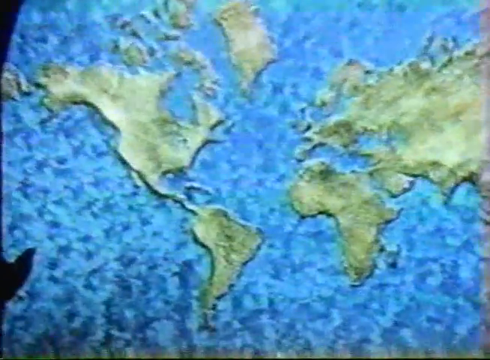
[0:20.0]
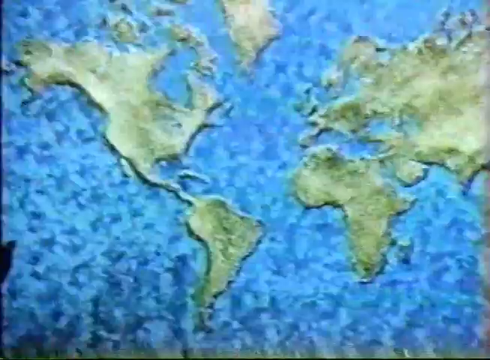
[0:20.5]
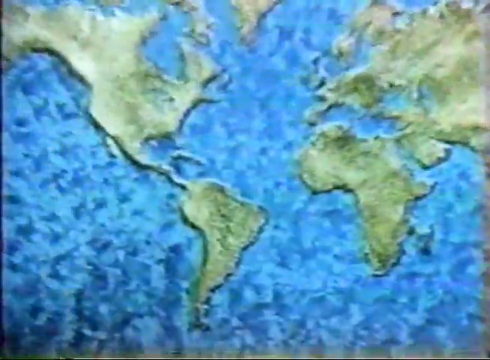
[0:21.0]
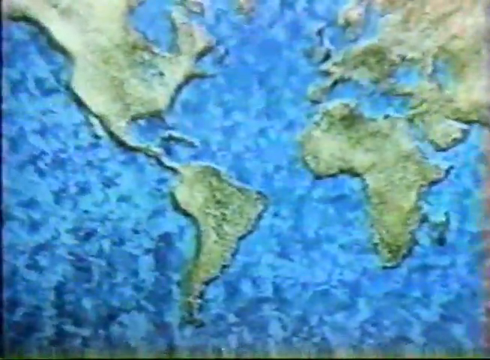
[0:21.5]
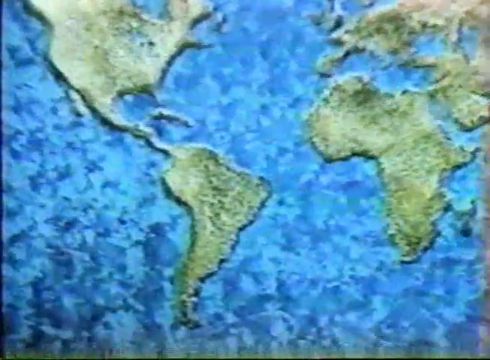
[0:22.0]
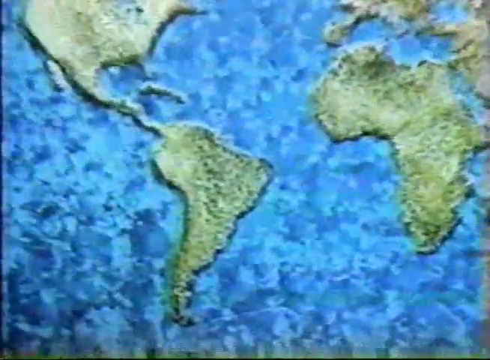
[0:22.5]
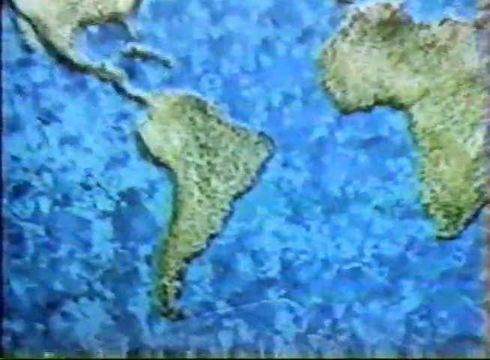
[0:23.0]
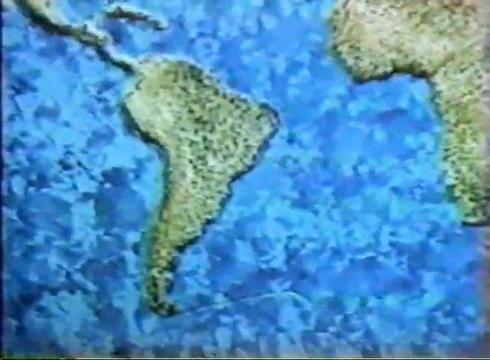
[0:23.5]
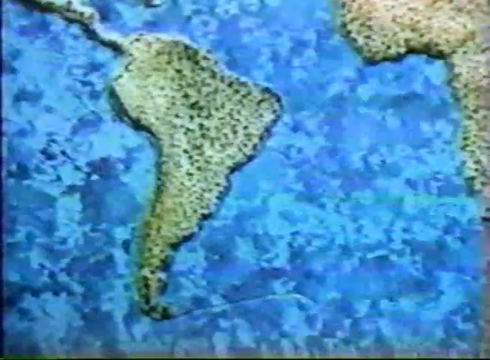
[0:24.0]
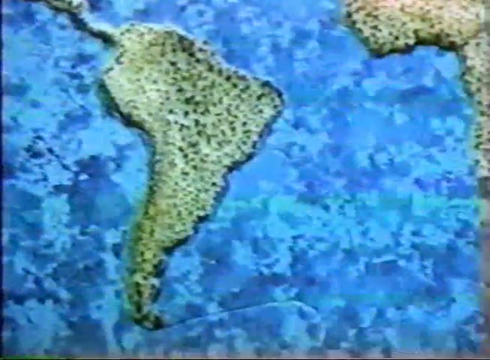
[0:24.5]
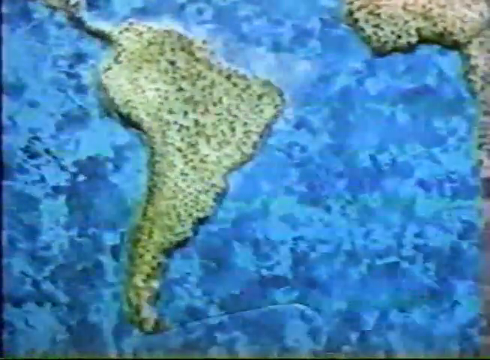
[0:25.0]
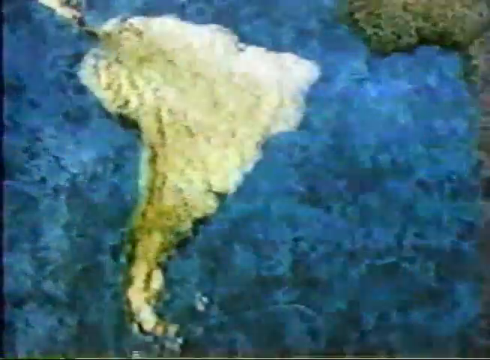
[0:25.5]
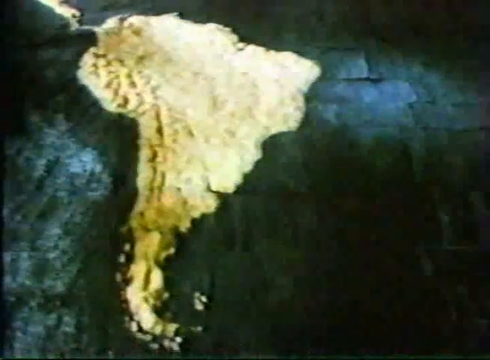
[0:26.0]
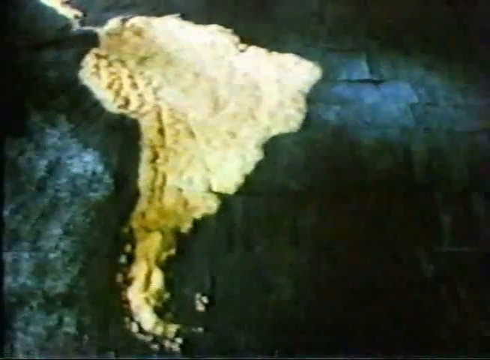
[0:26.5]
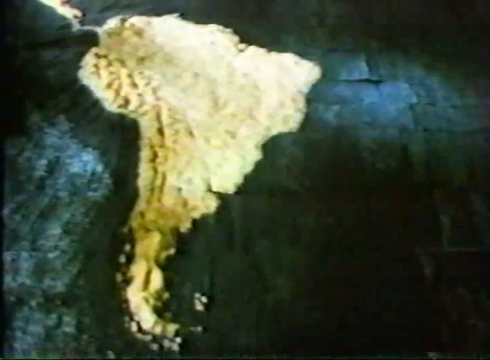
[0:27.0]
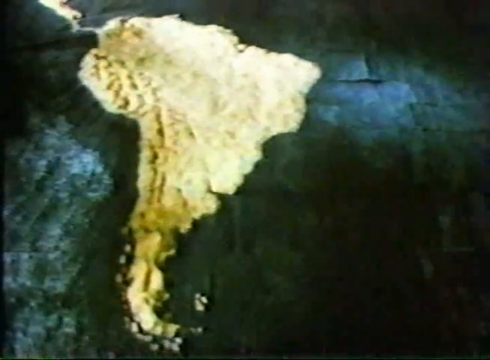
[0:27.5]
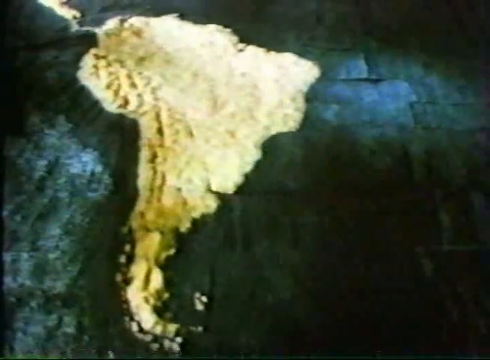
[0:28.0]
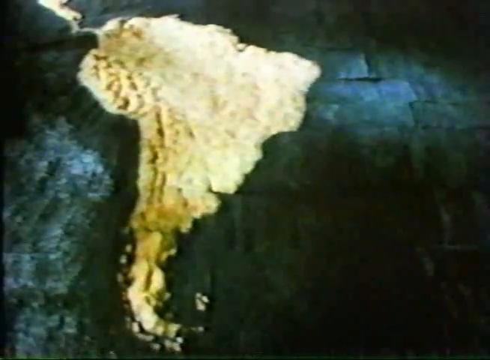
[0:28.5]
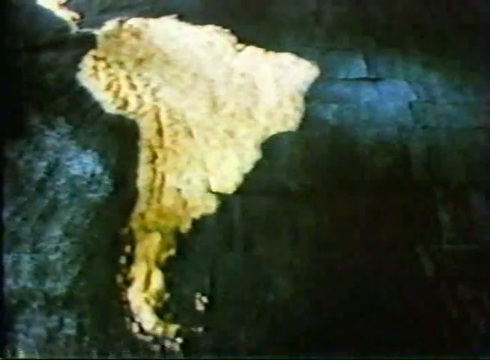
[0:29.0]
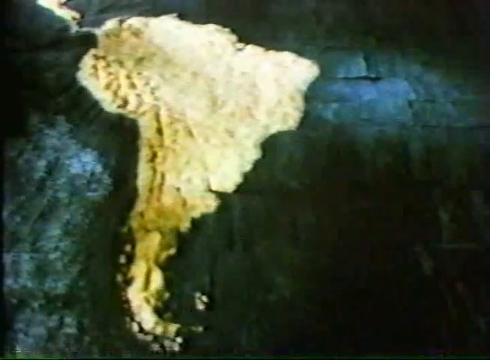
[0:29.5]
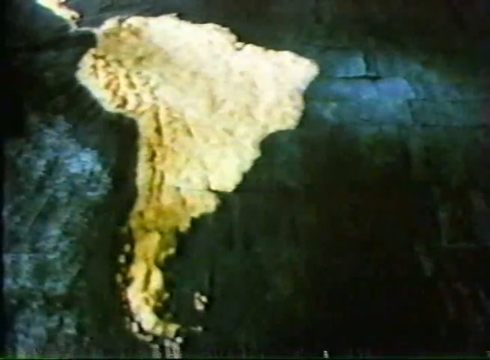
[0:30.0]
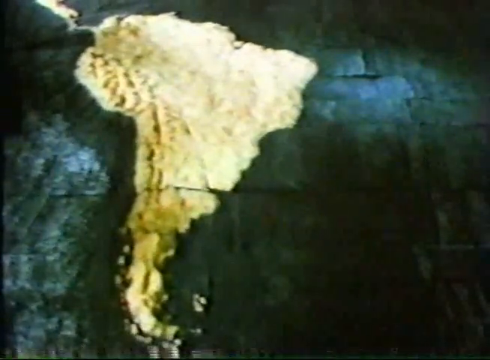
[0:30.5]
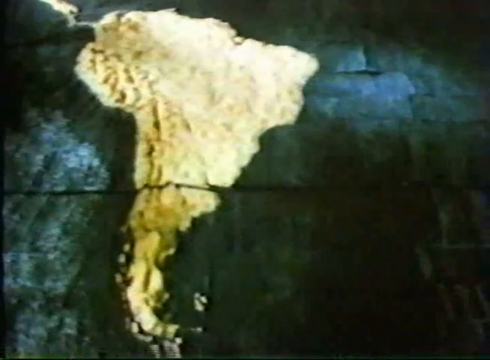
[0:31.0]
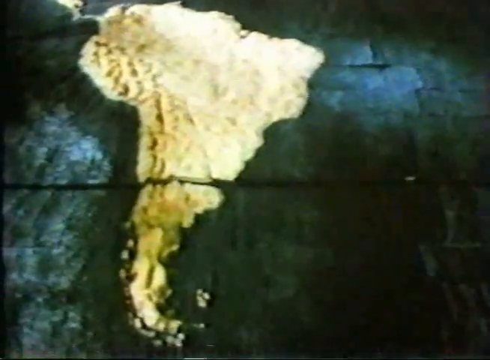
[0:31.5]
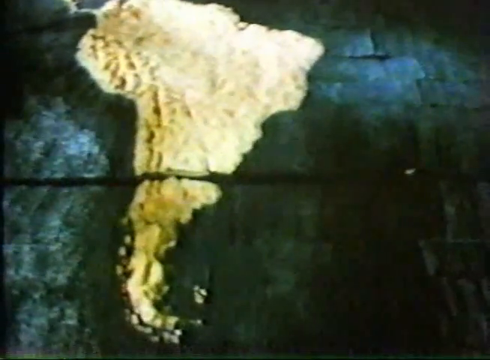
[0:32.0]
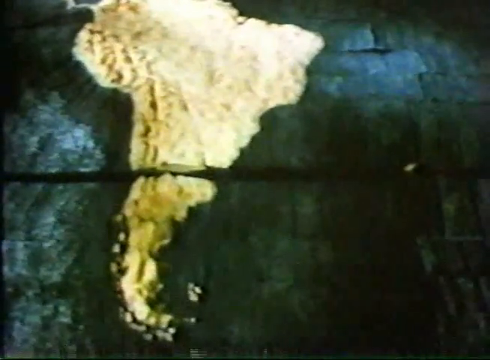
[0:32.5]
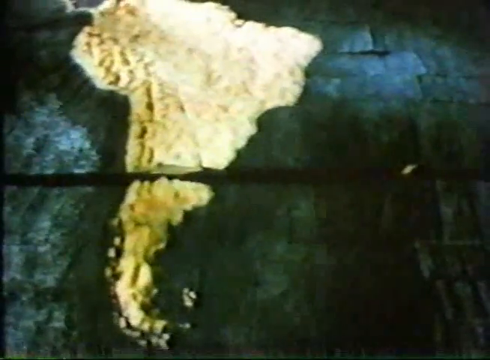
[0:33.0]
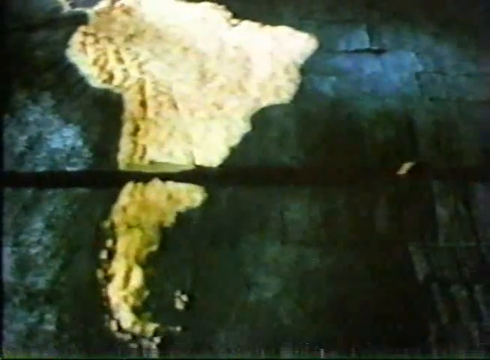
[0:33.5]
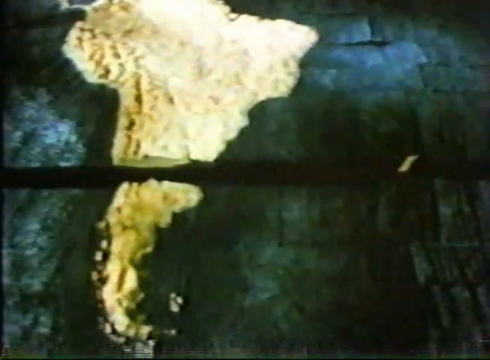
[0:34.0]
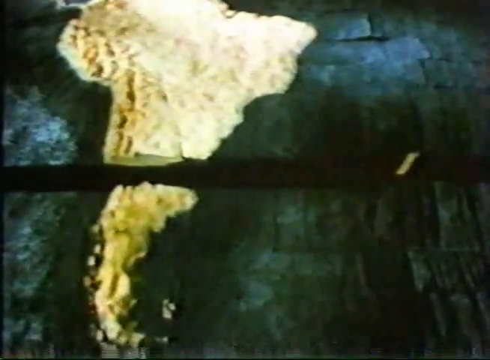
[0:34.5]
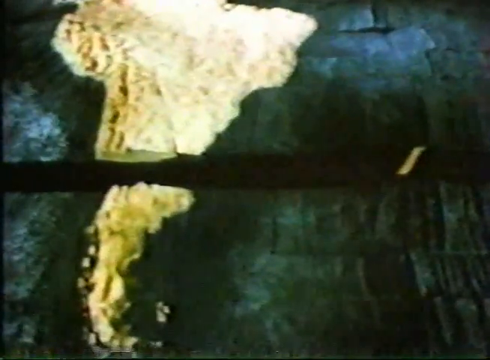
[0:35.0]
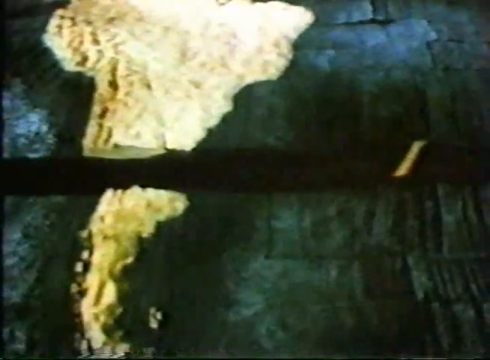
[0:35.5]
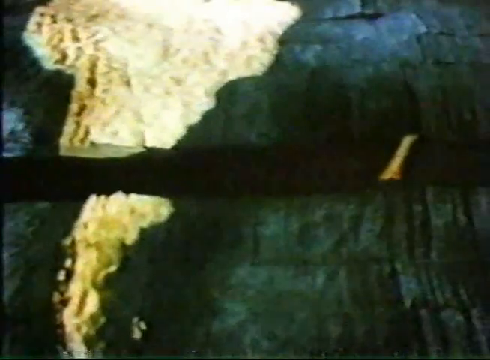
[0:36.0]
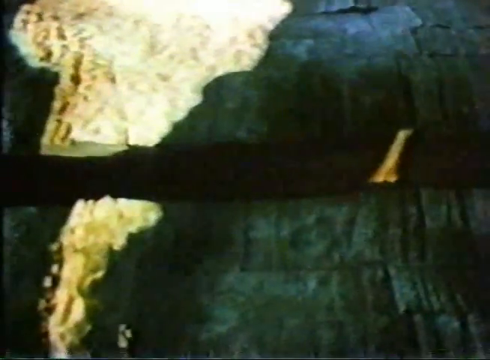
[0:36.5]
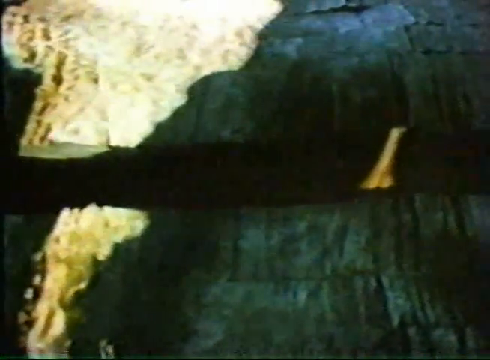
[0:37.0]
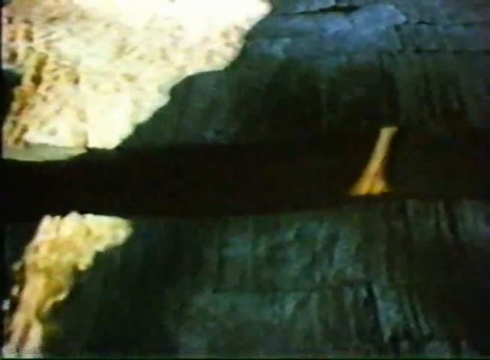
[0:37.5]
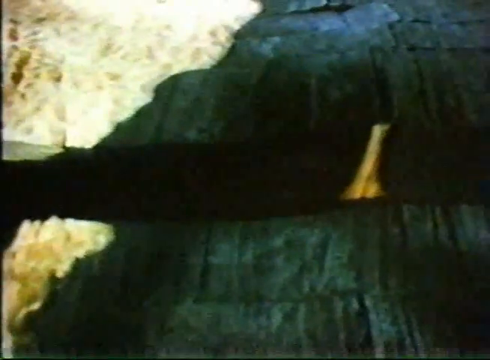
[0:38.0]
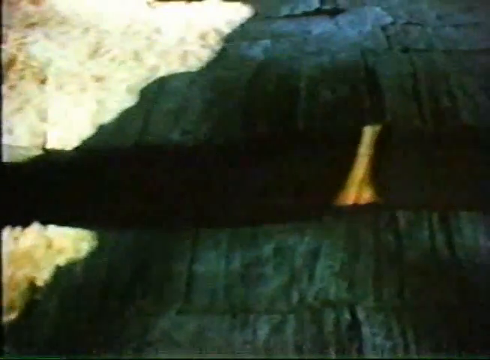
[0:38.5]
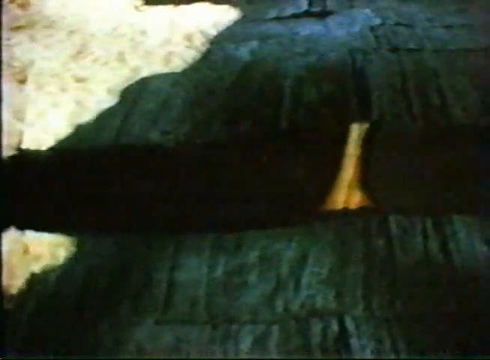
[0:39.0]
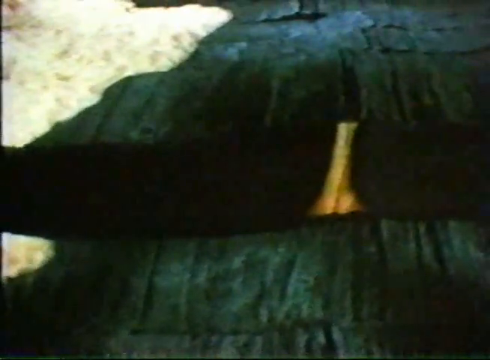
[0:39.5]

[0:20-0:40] The map is now joined together, with textured green and blue parts and mostly a creamish color. The camera zooms in and keeps moving closer, showing the continents, including the African continent and another continent next to it, which changes color to black with a gold line as the camera comes closer. The continent is then cut in half and opens, and something gold and textured comes out from between the halves; it looks like the head of a bird. The visuals are difficult to make out even with the camera zoomed in.